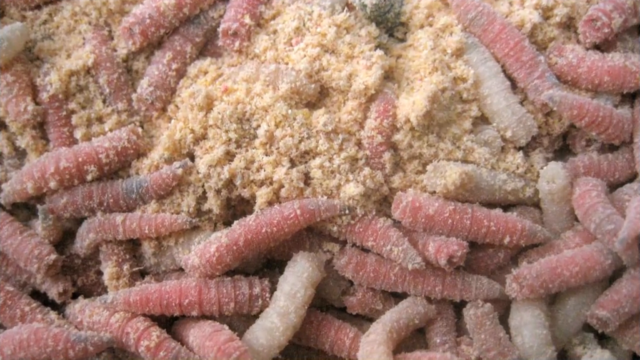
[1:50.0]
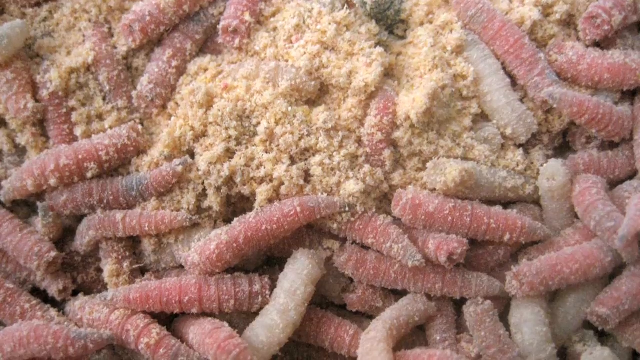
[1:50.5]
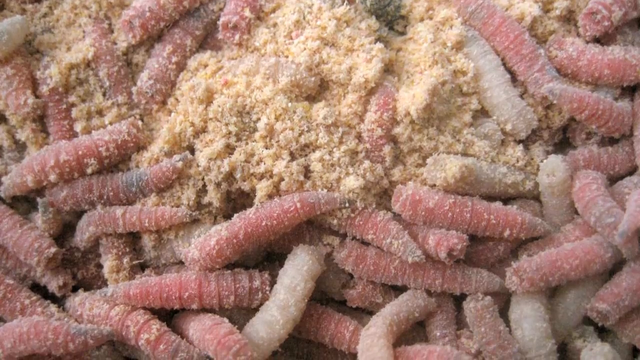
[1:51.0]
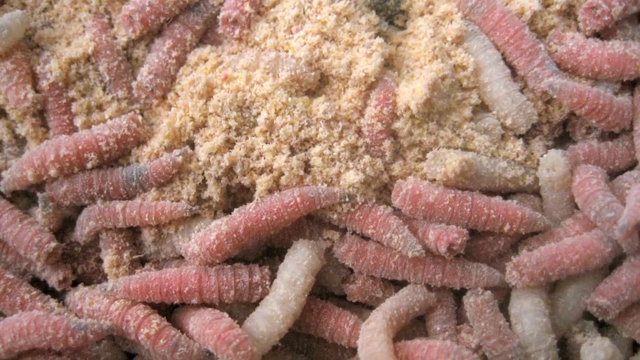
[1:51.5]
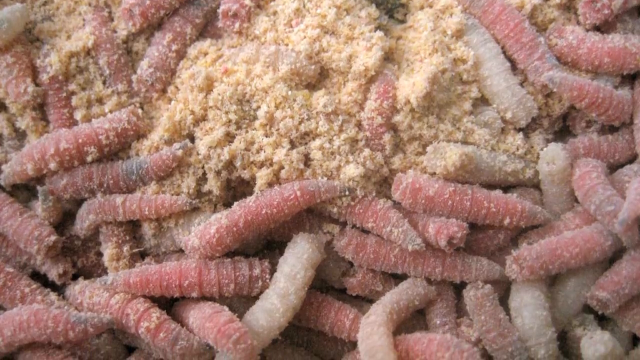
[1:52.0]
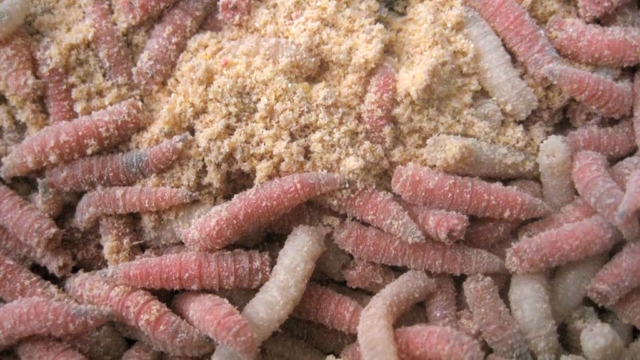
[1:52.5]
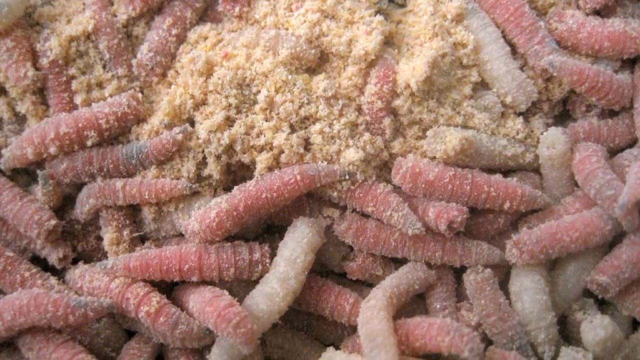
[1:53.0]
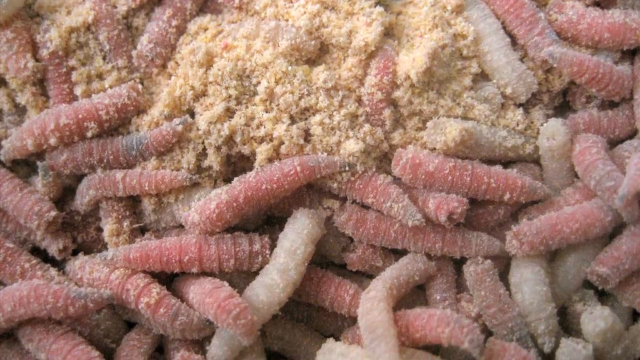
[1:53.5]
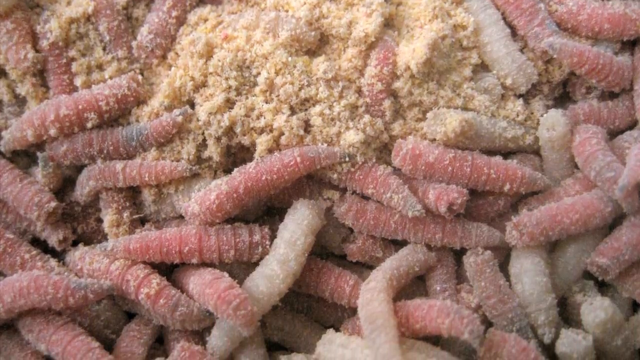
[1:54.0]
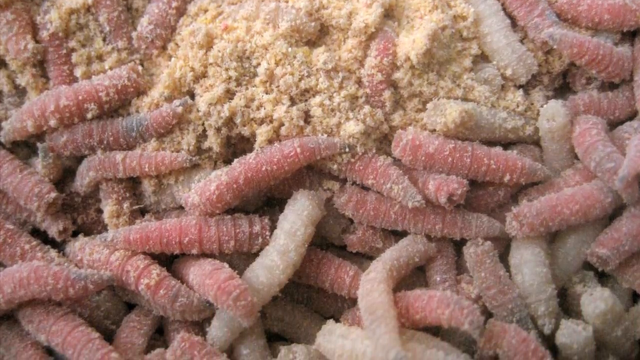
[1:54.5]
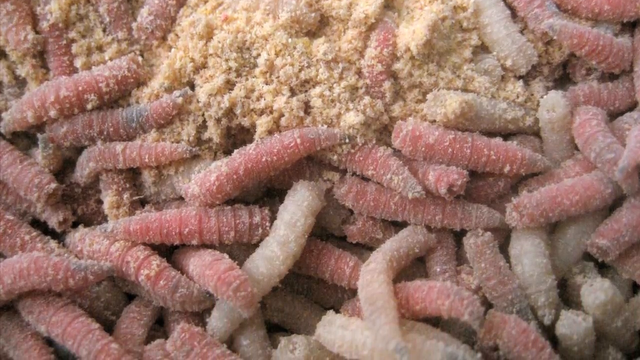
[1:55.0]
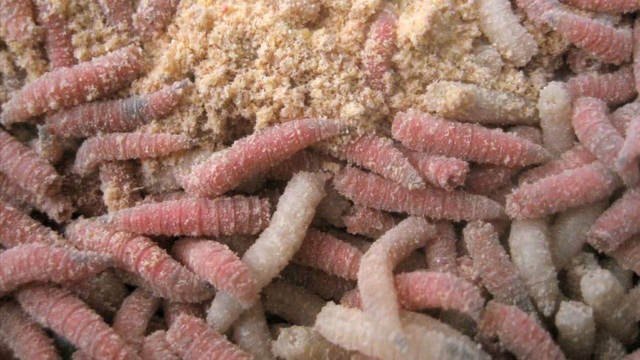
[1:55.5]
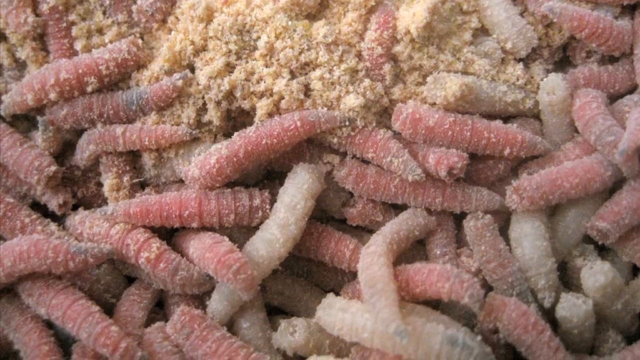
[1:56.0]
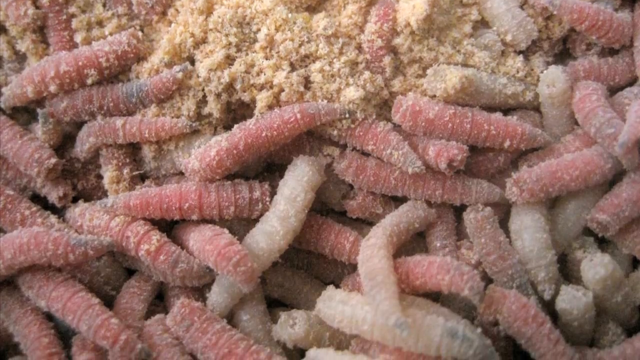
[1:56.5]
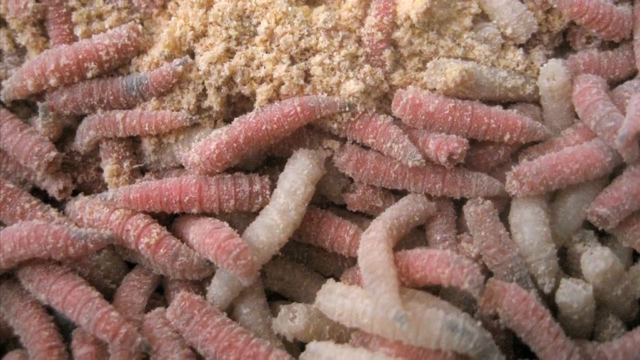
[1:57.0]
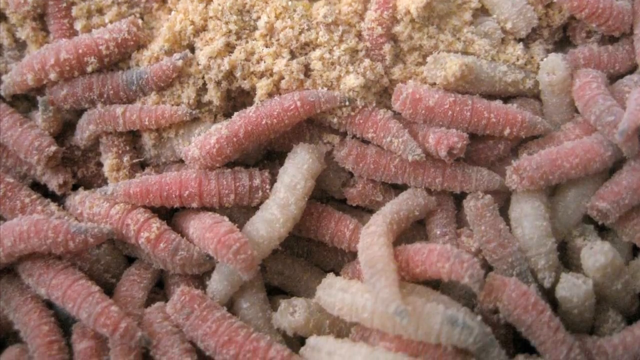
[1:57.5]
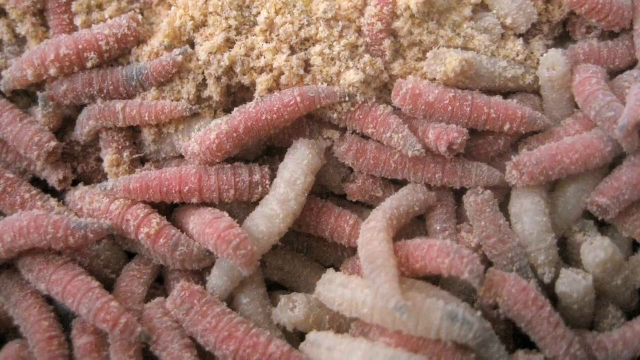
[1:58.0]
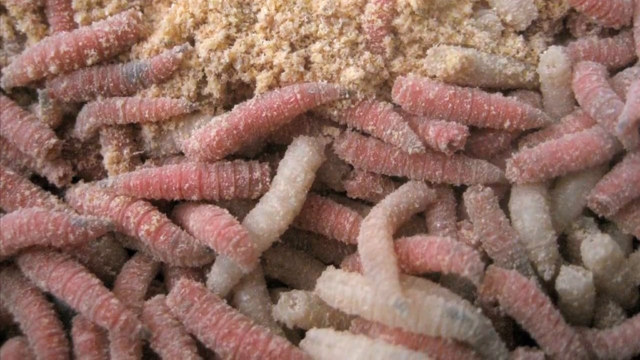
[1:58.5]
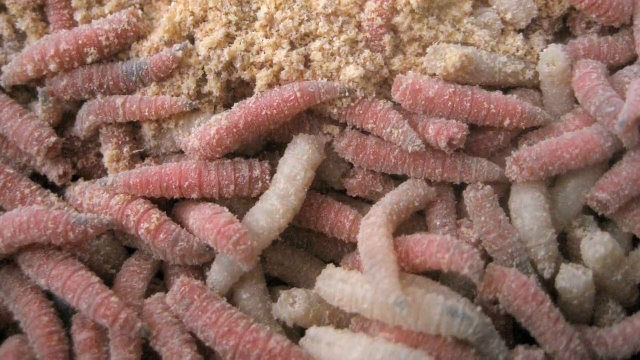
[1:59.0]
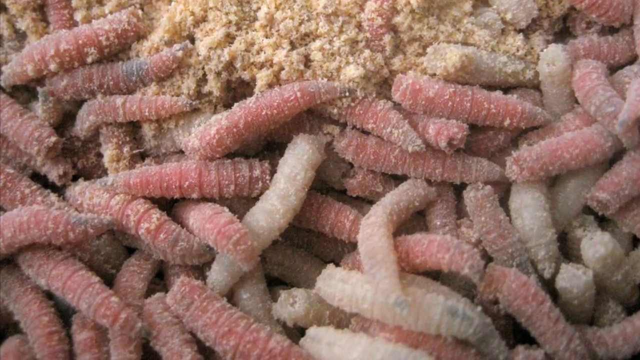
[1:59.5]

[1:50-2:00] The image of maggots crawling on the outside of the cheese pans down to reveal more maggots. Some of the red maggots seem to be more deeply embedded in the sides of the cheese. The maggots have thicker bodies in the center with tapering tails, and their outer appearance is ribbed, somewhat resembling an earthworm. The crumbly texture on the outside of the cheese also covers the maggots, leaving small tan specks on their bodies.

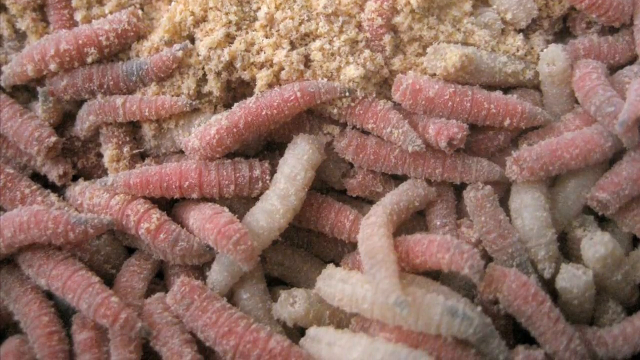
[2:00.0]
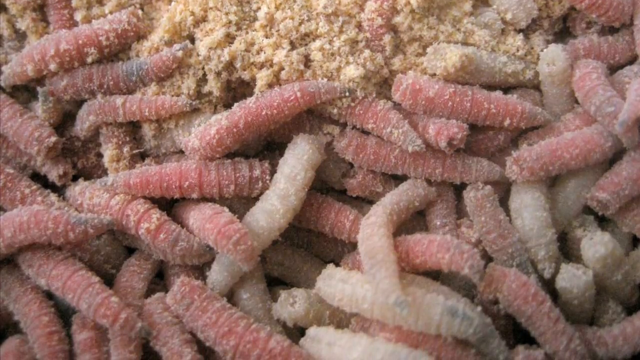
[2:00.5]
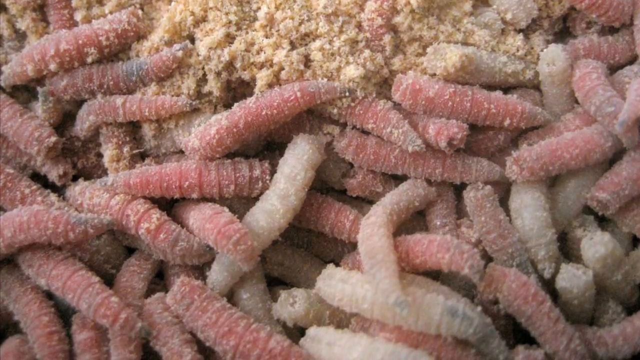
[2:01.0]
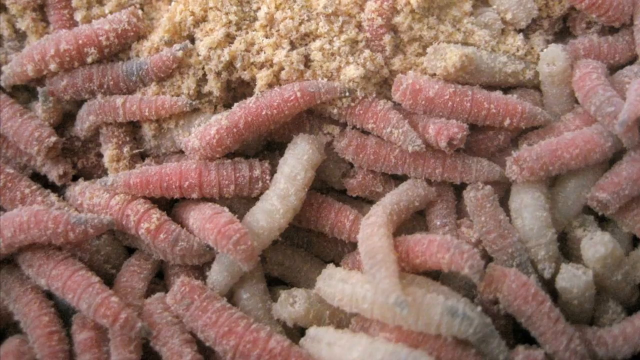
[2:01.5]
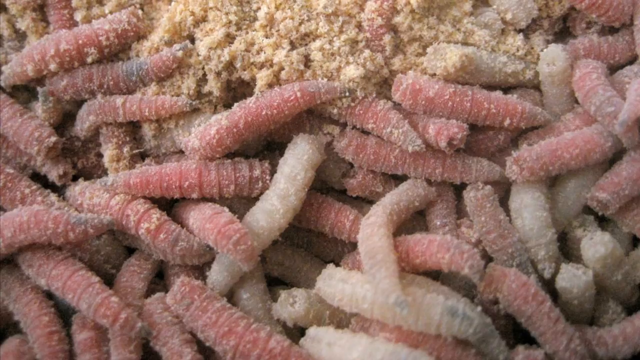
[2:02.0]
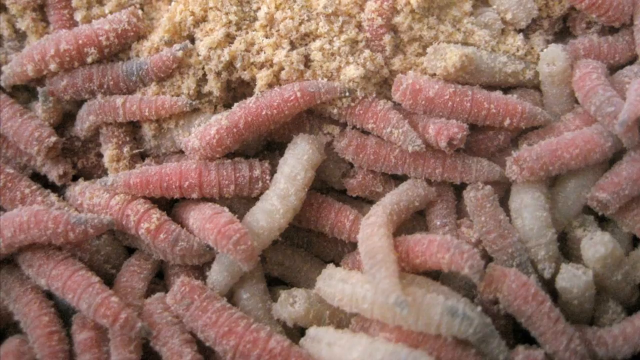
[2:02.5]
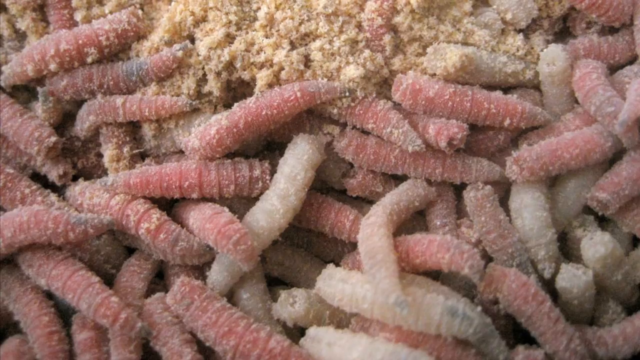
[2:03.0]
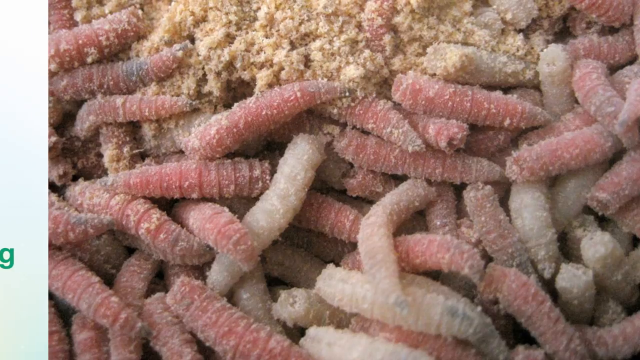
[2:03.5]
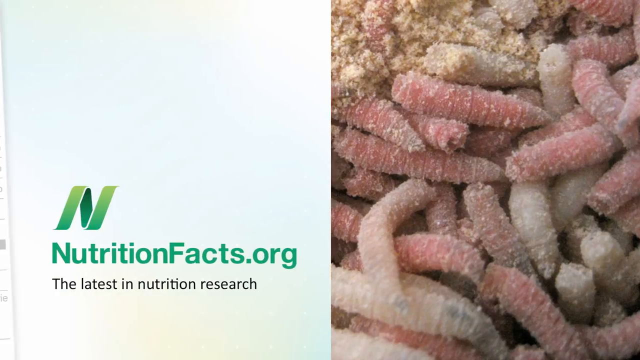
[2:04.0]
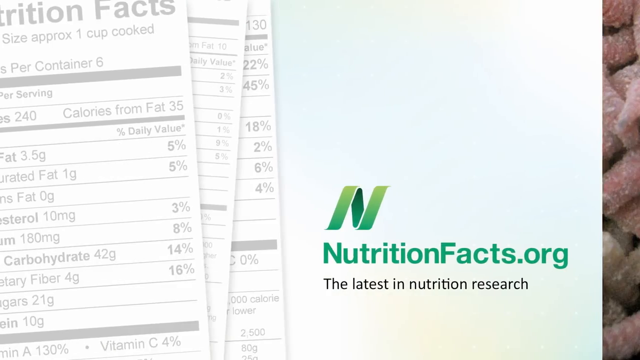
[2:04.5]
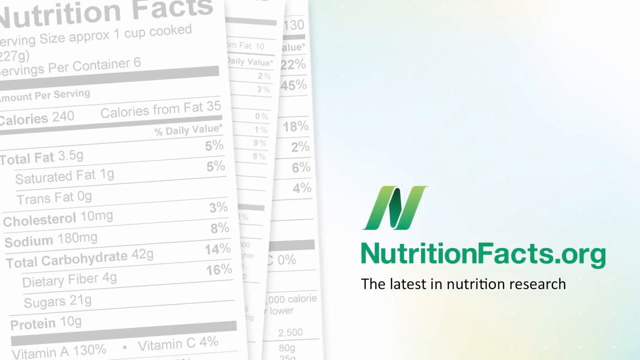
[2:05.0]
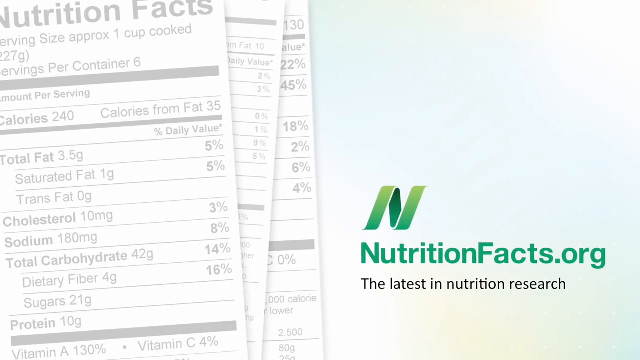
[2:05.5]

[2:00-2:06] The bottom part of the image of the maggots encased in the outside of the cheese comes into view. There, the maggots crawl in between each other's bodies and seem to go very deep into the cheese. Only parts of some maggots are visible because so many are piled on top of each other. The cheese dust is more prominent in the ribbing of their bodies, and the worms are more prominent at the bottom of the image.